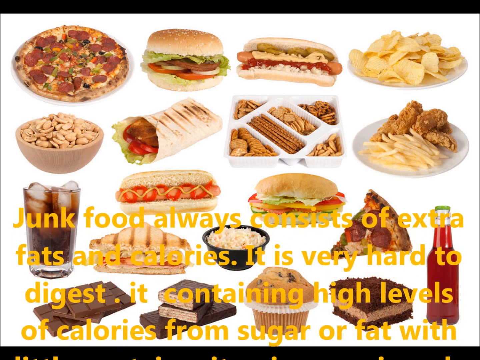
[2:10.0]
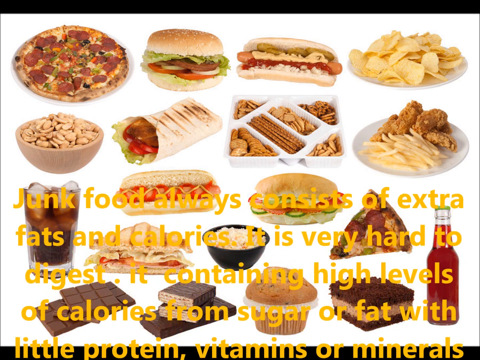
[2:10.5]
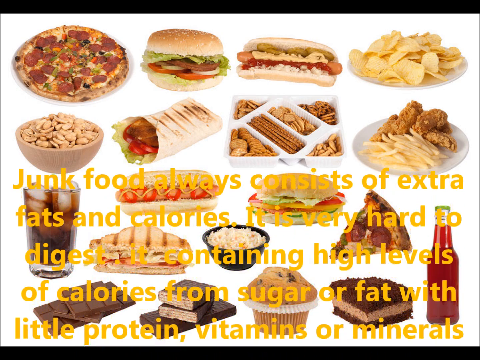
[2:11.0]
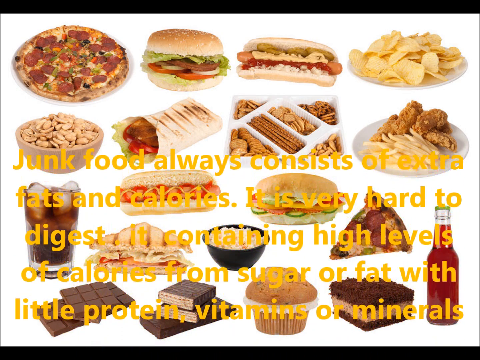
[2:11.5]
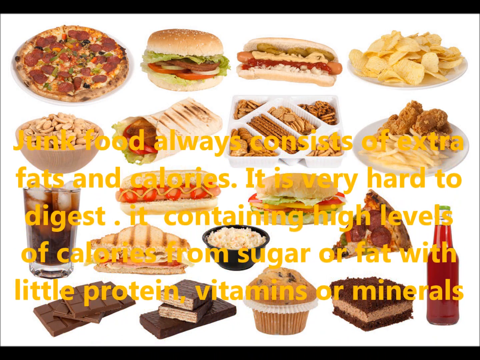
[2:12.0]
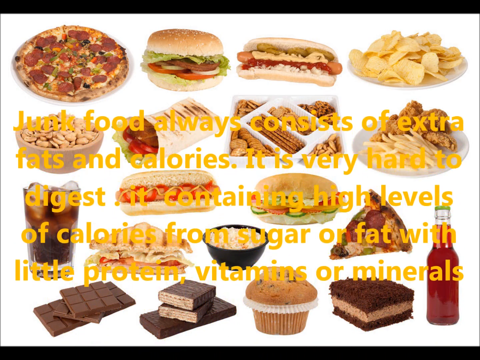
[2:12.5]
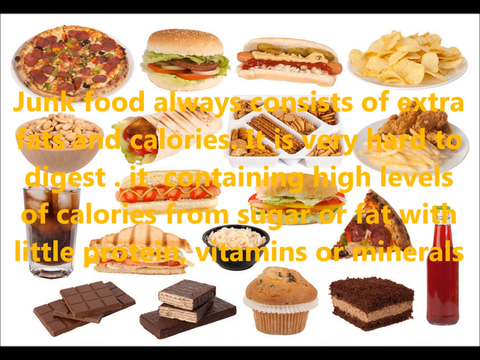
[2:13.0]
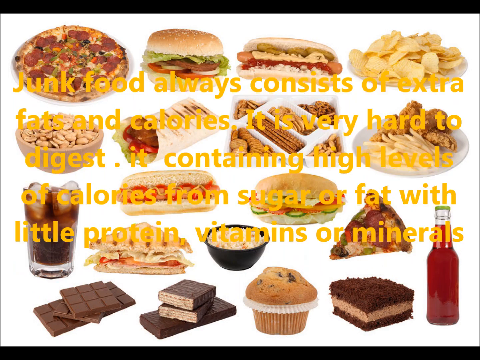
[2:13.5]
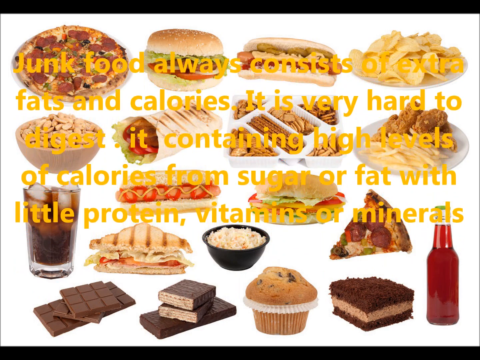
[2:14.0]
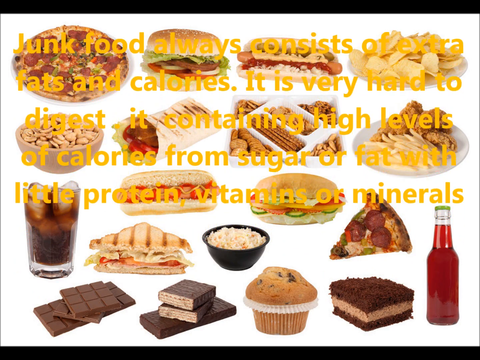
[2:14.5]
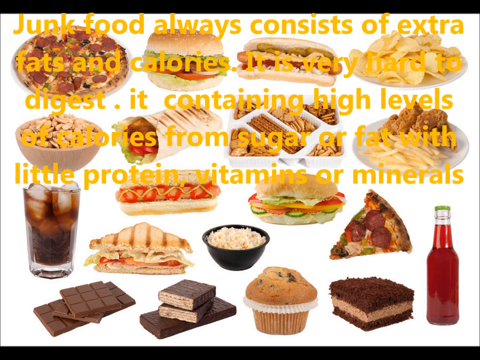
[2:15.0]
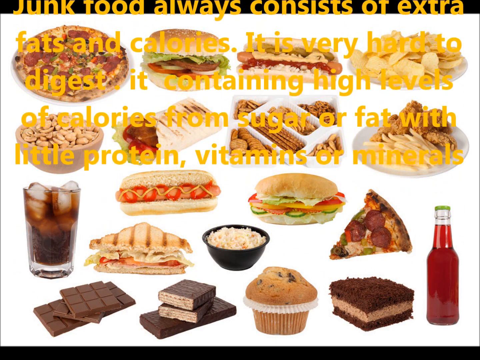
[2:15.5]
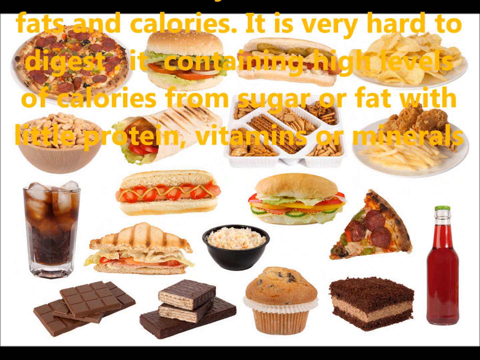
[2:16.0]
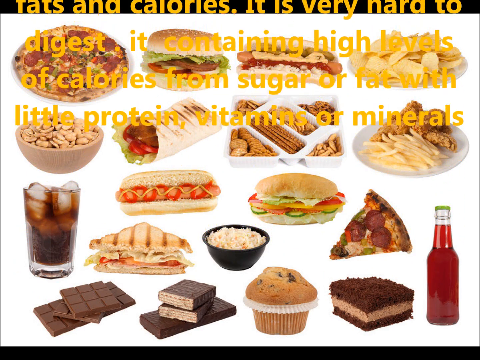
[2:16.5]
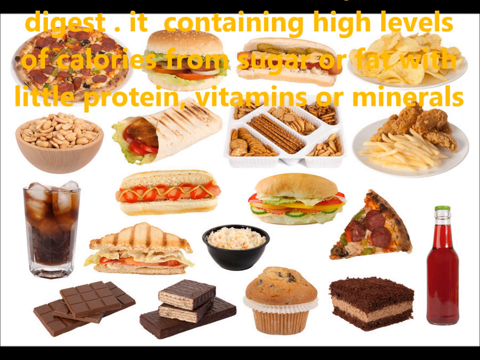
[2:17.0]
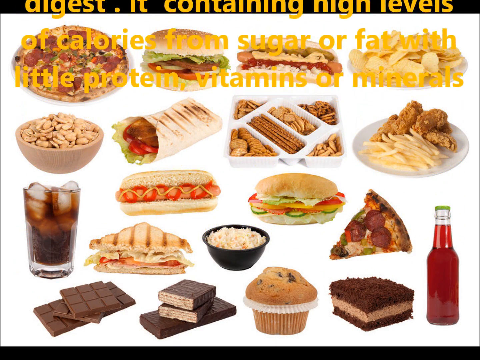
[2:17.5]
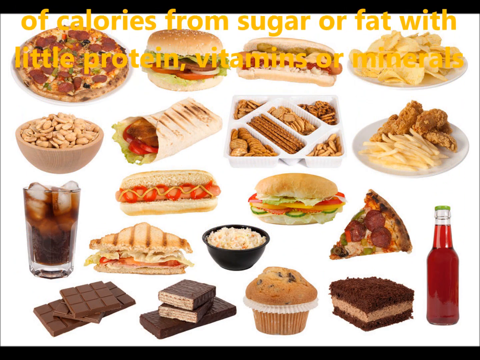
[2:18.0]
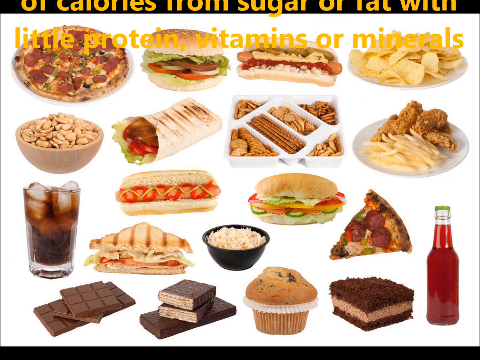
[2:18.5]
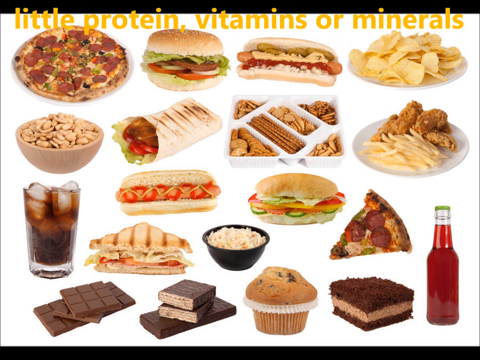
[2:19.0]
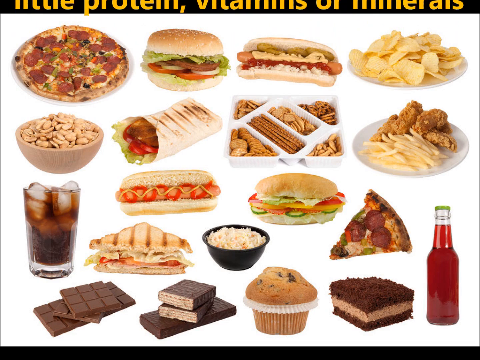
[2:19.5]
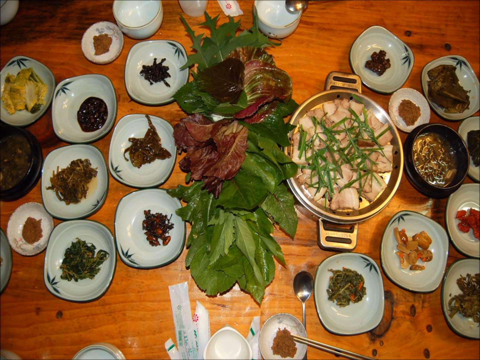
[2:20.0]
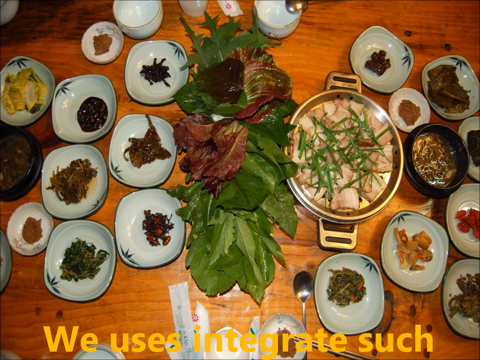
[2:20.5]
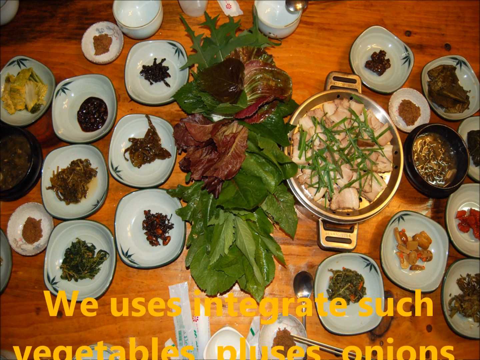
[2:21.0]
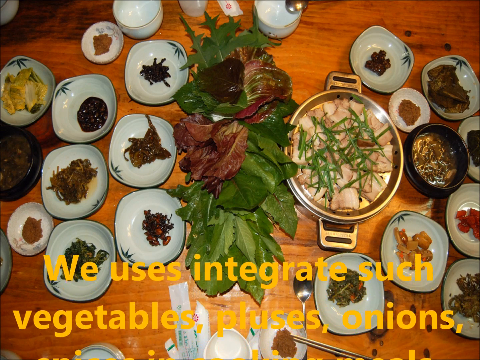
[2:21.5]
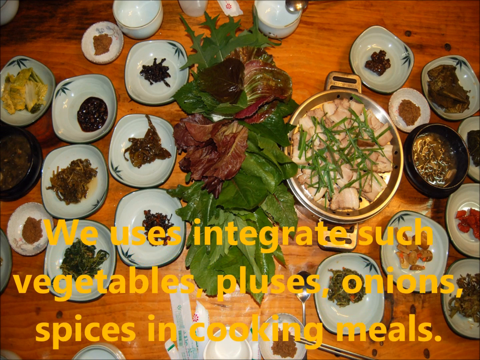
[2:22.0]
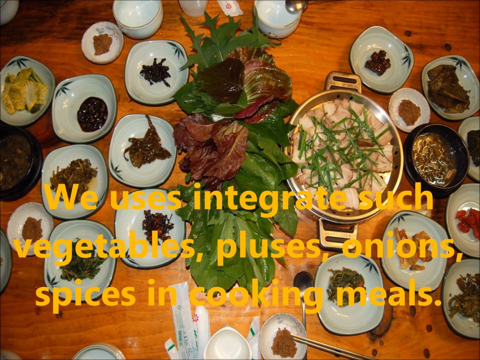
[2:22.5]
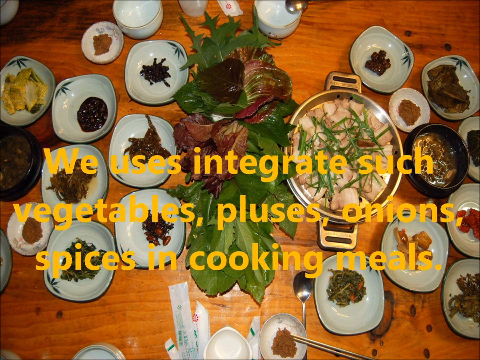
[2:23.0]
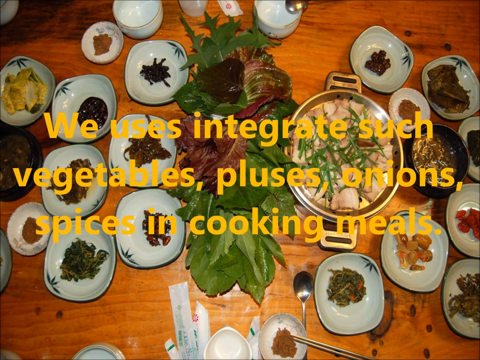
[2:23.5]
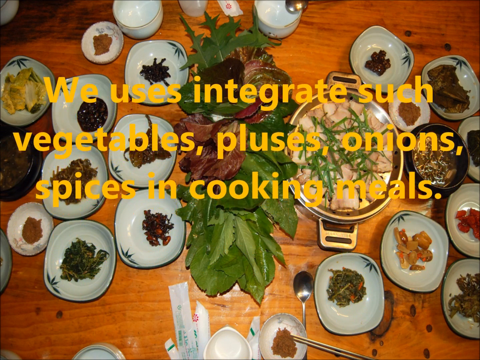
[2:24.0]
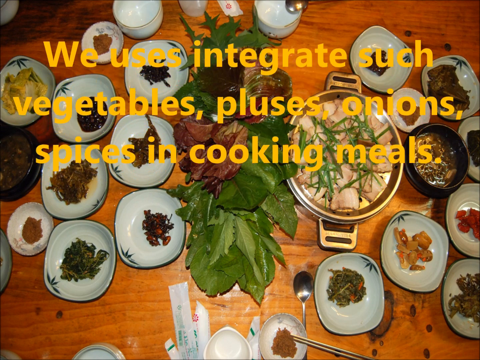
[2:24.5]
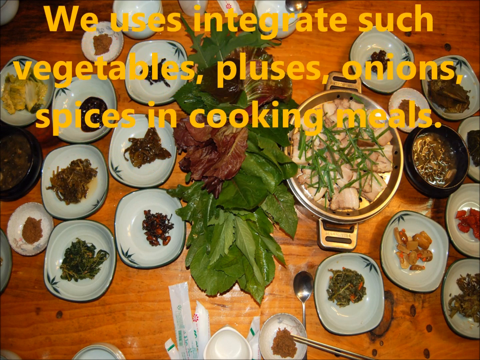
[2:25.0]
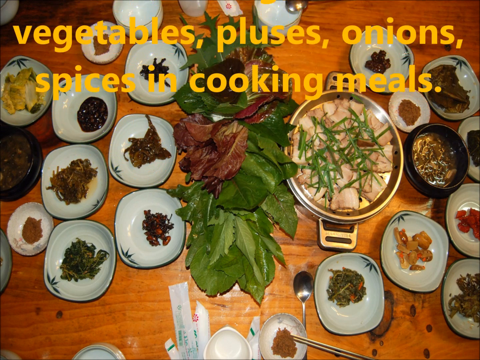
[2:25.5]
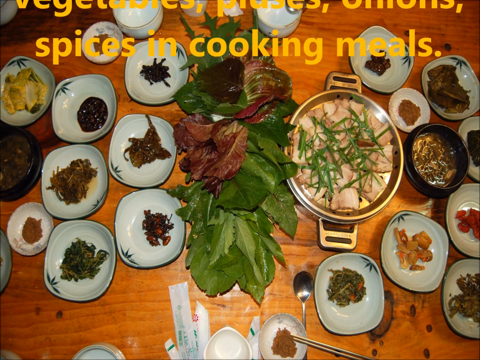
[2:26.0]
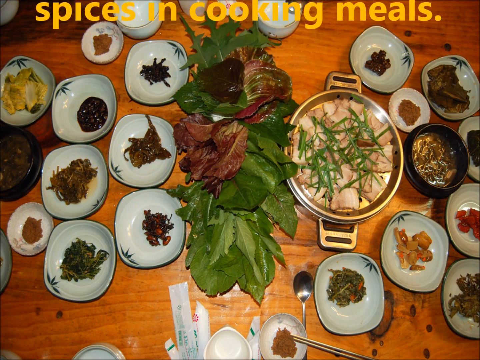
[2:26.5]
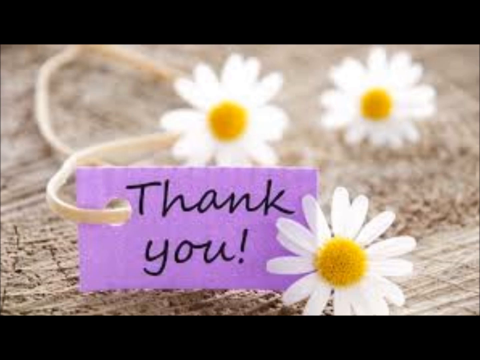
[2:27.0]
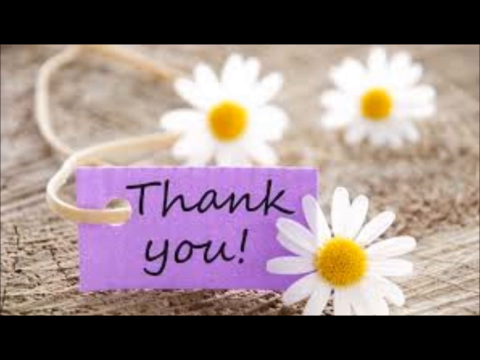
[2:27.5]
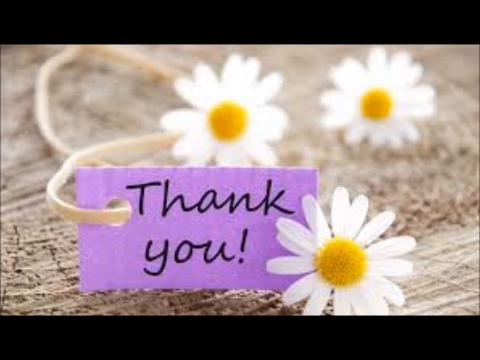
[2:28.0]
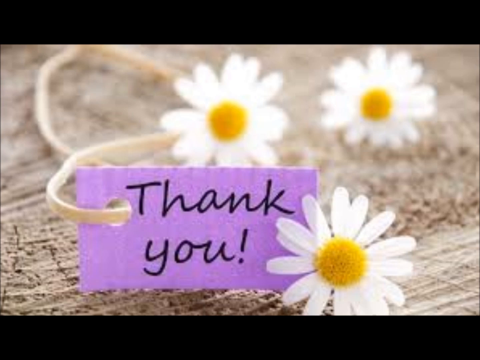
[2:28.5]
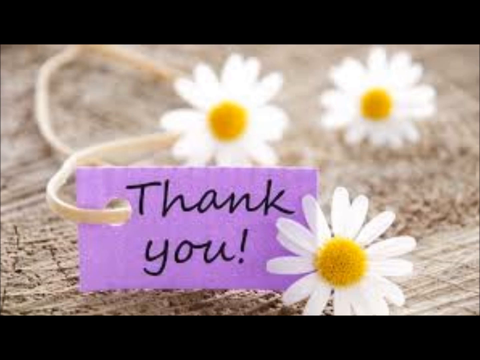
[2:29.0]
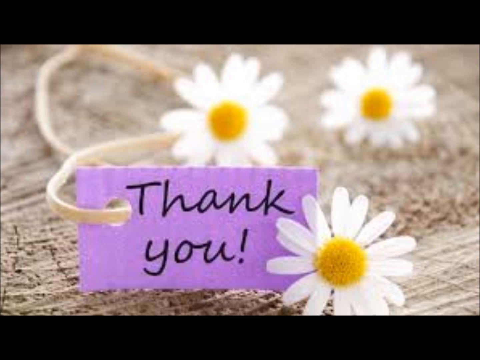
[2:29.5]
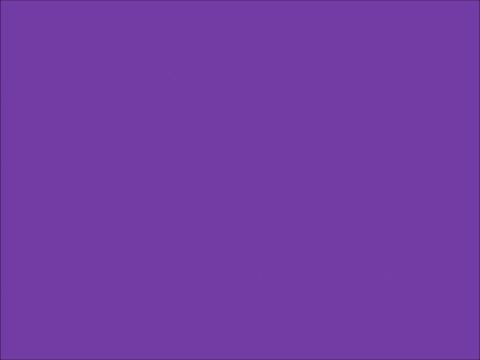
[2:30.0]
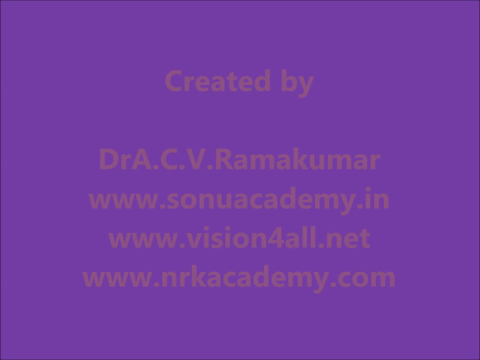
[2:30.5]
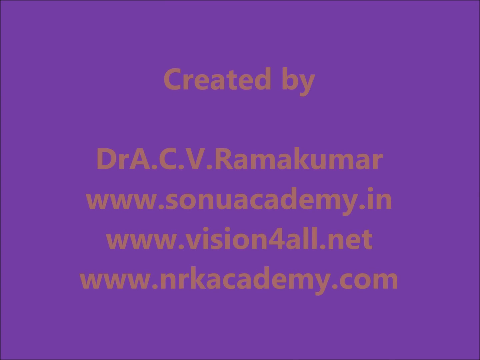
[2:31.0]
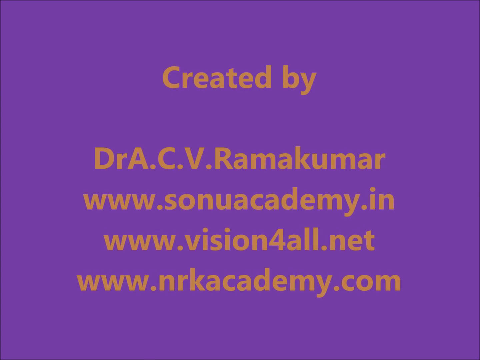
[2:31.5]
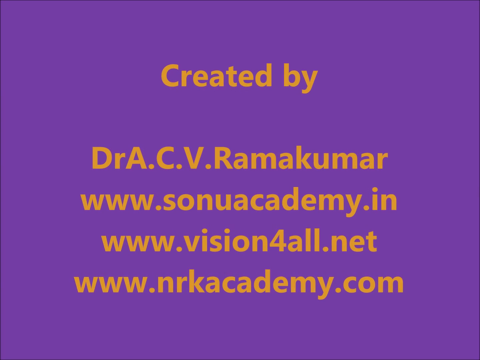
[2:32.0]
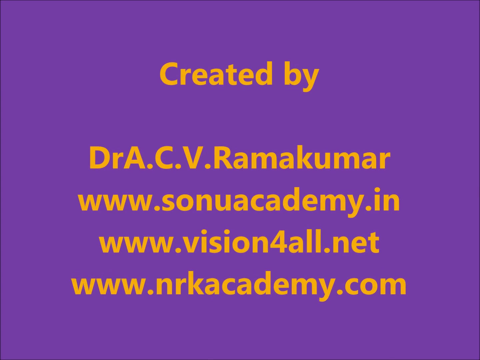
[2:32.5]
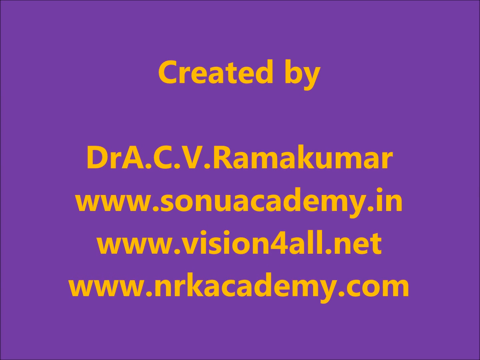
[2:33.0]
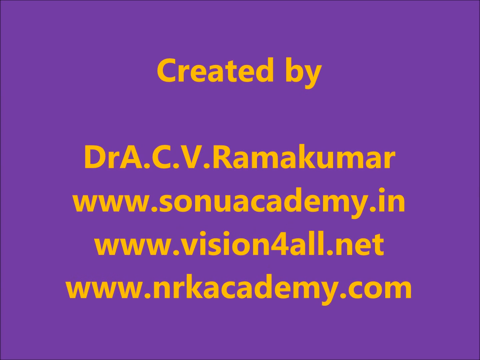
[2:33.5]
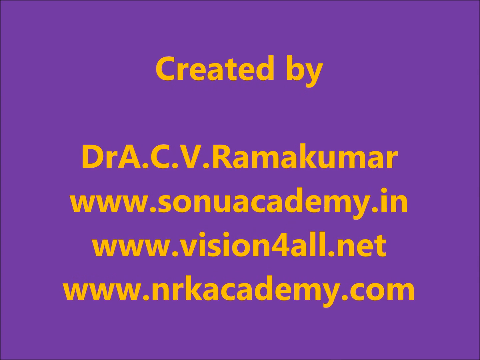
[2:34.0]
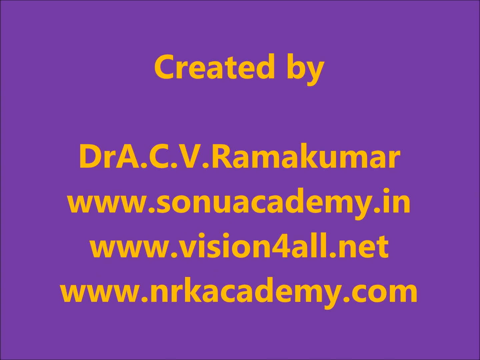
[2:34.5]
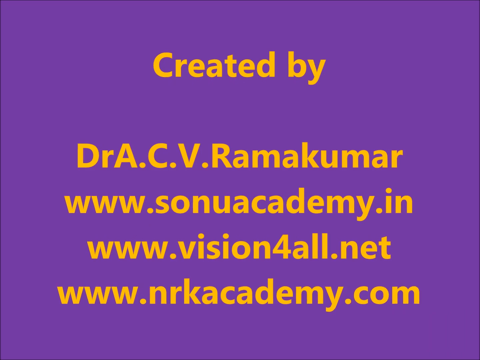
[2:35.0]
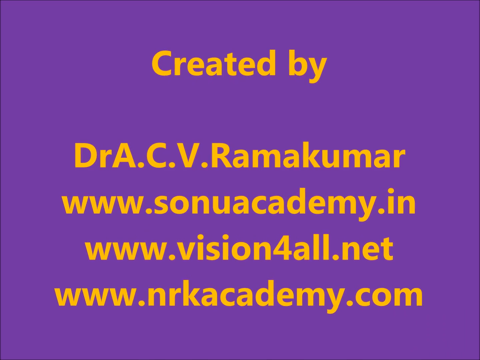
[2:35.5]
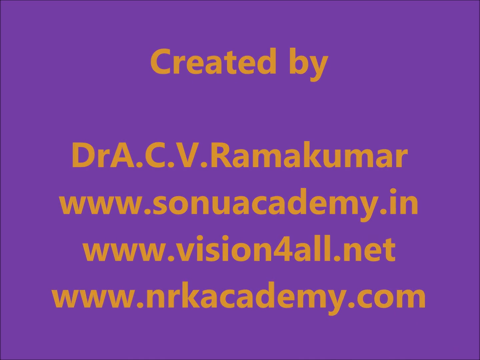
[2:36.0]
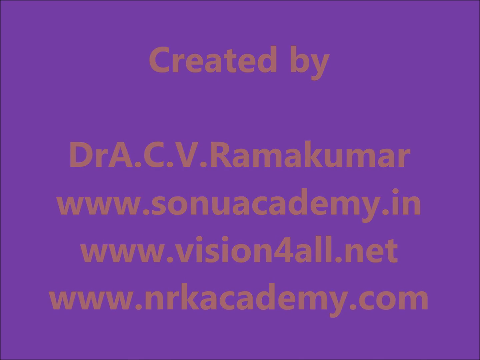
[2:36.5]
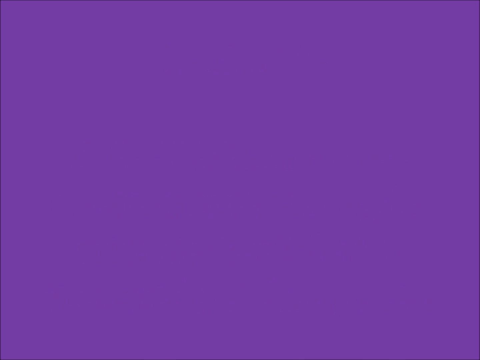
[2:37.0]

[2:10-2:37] Text describes food that is hard to digest, has a lot of sugar, is high in calories and fat, and has very little protein. Drinks such as Coca-Cola are visible, along with a bunch of cakes, muffins and other items that are not good for you. The video then transitions to another picture with text about how vegetables, onions and spices are good for cooking meals, showing a bunch of different toppings and spices on the table. It ends with a thank you card and shows who the video was created by: Dr. ACB Ramechmar. A list of different websites to visit to learn more information is also shown.